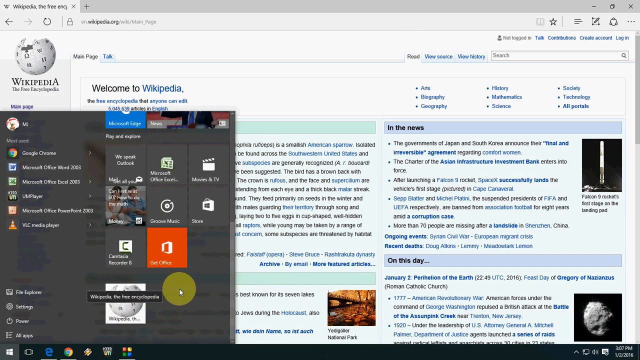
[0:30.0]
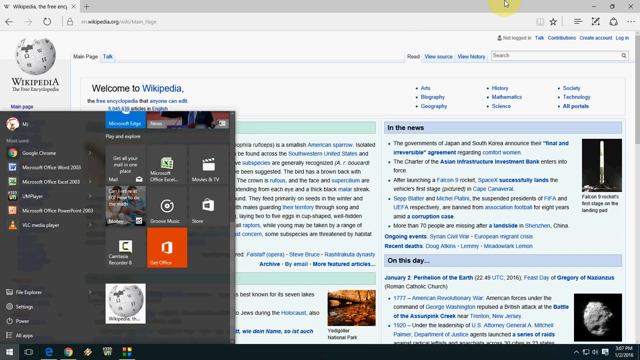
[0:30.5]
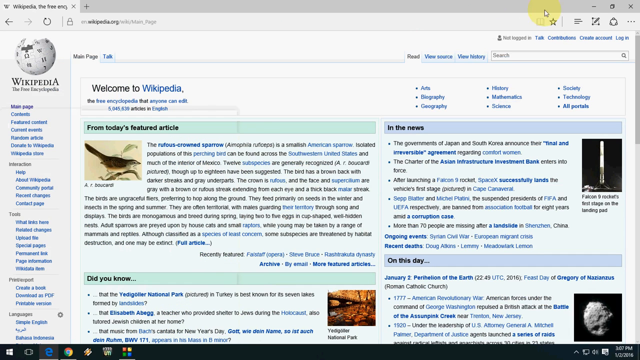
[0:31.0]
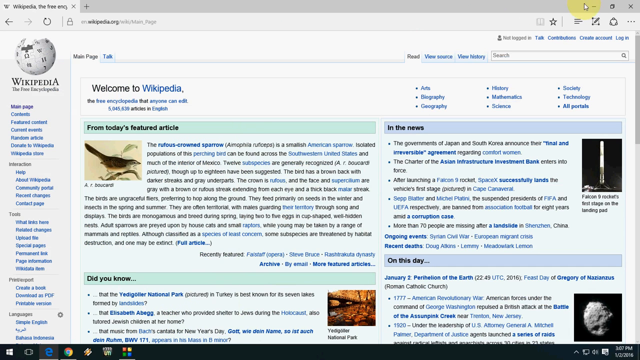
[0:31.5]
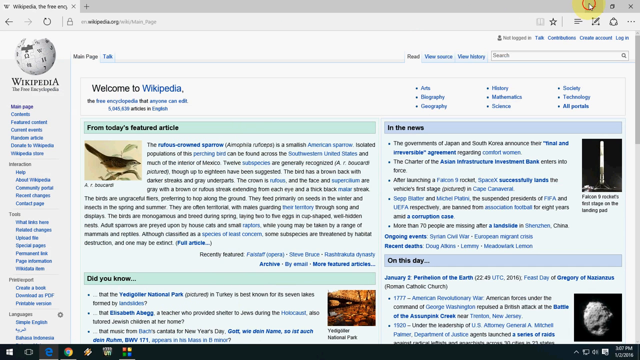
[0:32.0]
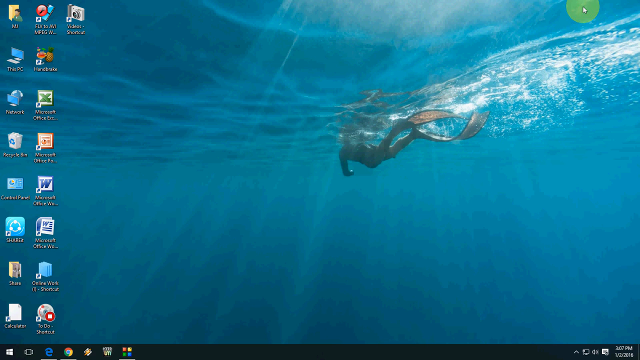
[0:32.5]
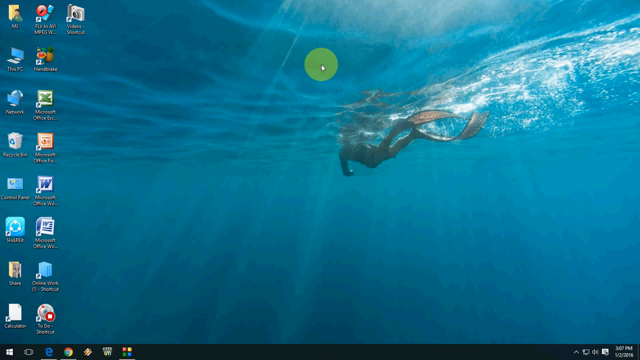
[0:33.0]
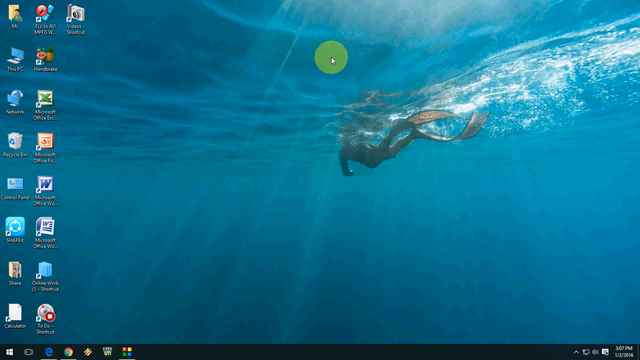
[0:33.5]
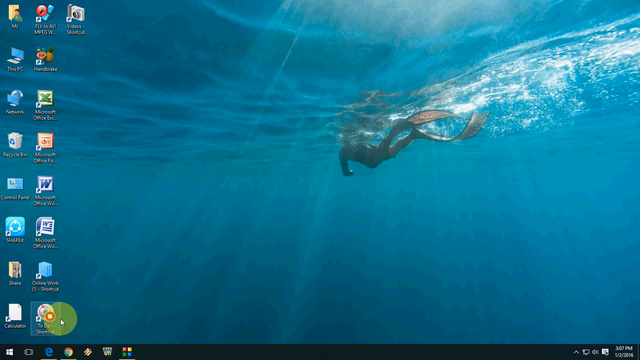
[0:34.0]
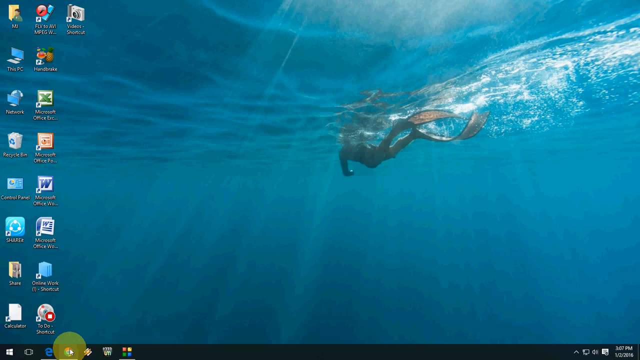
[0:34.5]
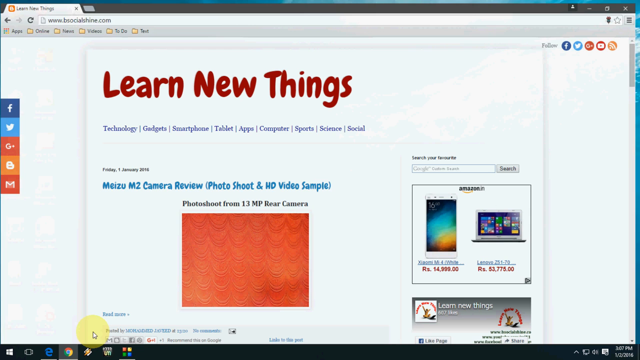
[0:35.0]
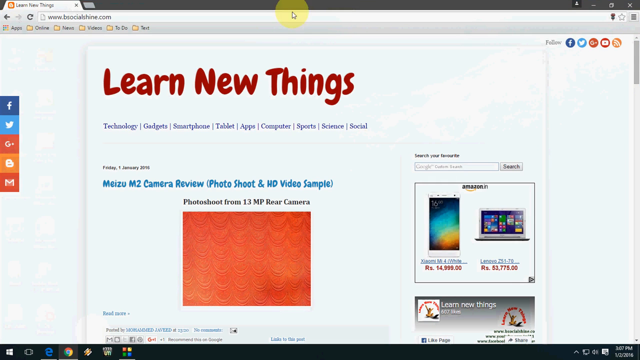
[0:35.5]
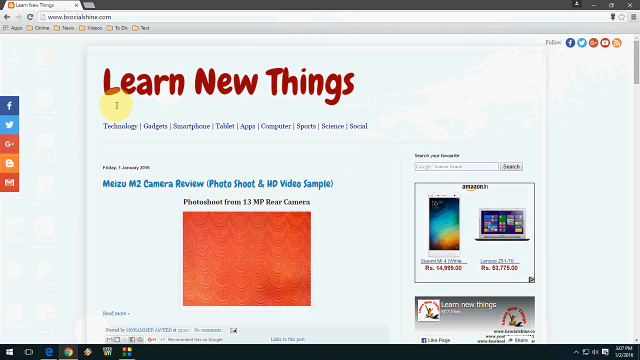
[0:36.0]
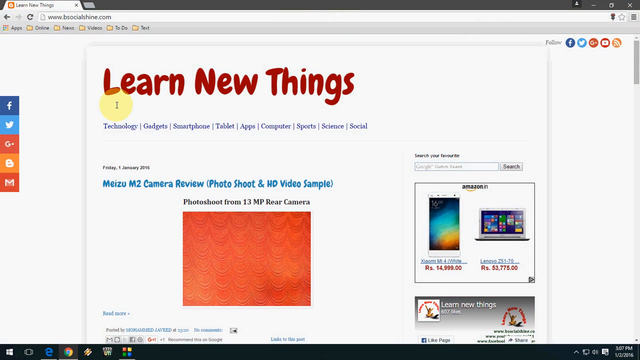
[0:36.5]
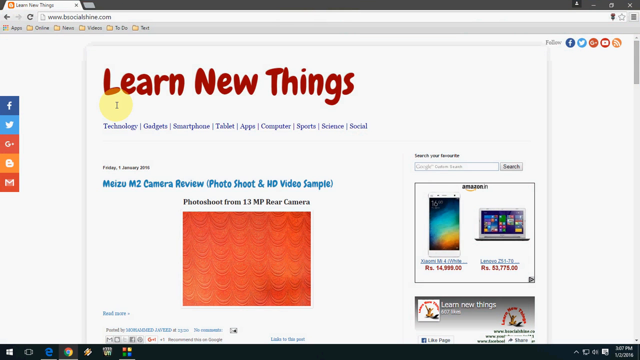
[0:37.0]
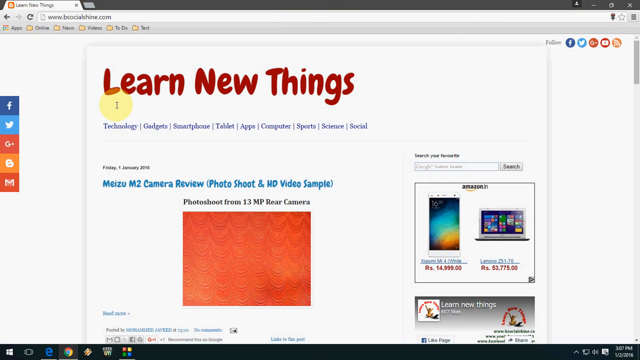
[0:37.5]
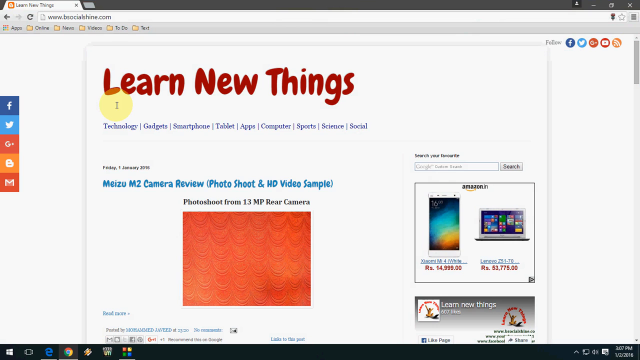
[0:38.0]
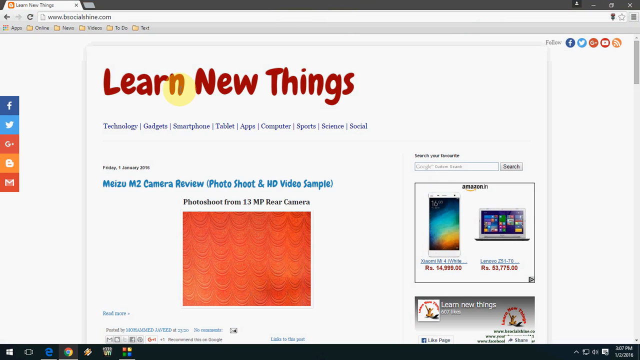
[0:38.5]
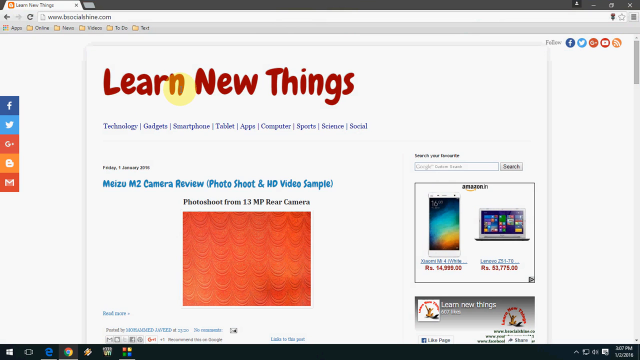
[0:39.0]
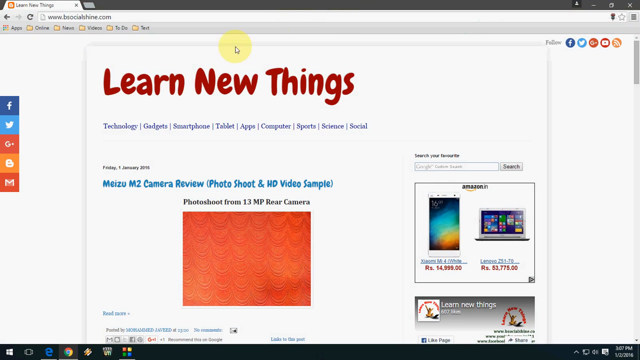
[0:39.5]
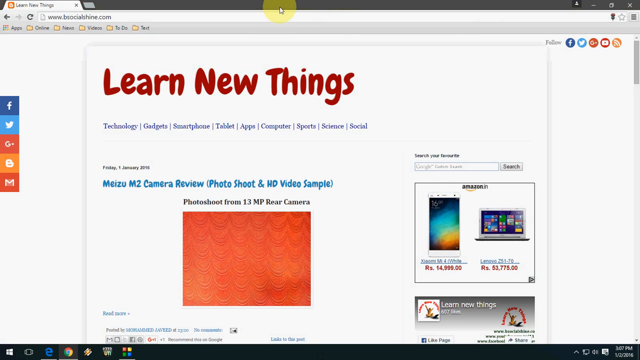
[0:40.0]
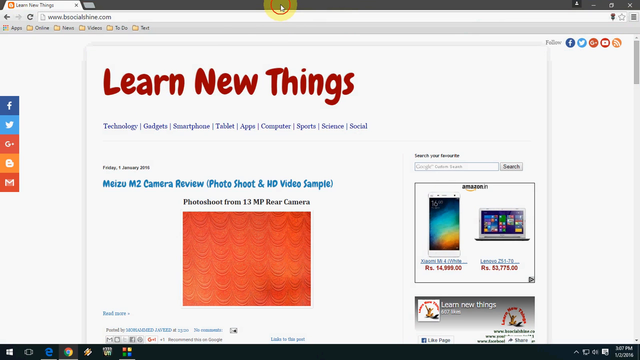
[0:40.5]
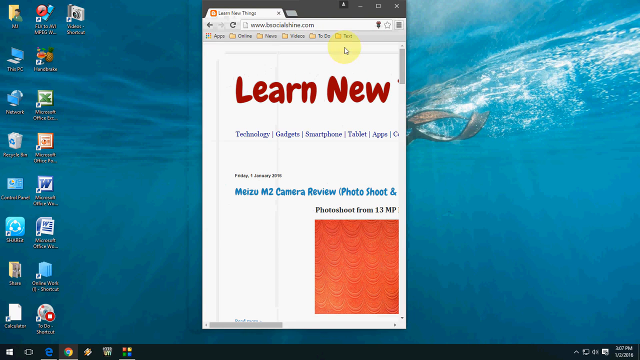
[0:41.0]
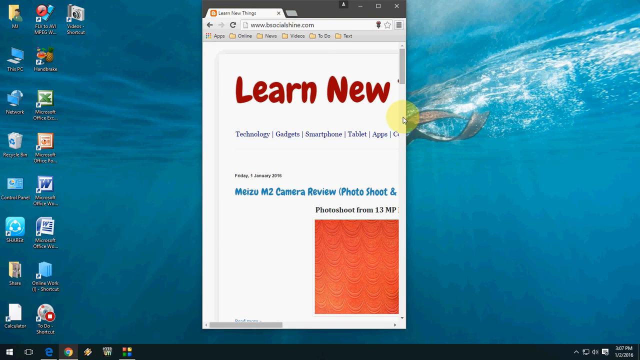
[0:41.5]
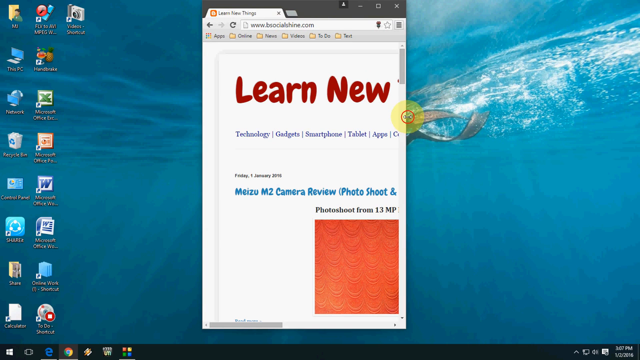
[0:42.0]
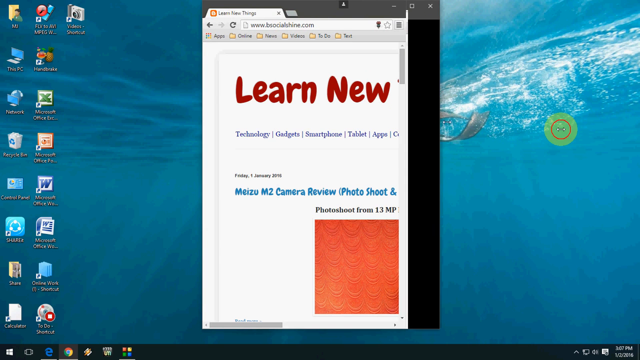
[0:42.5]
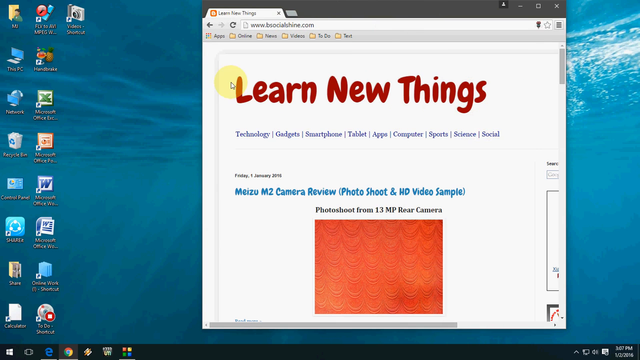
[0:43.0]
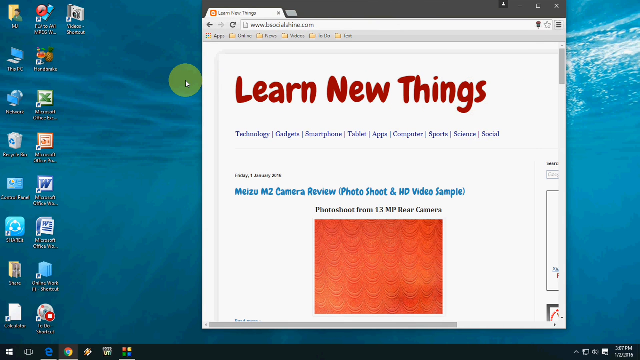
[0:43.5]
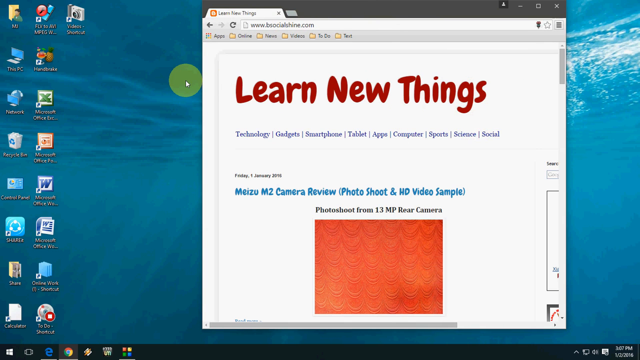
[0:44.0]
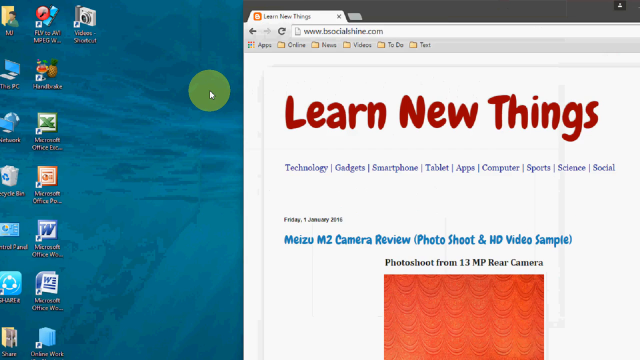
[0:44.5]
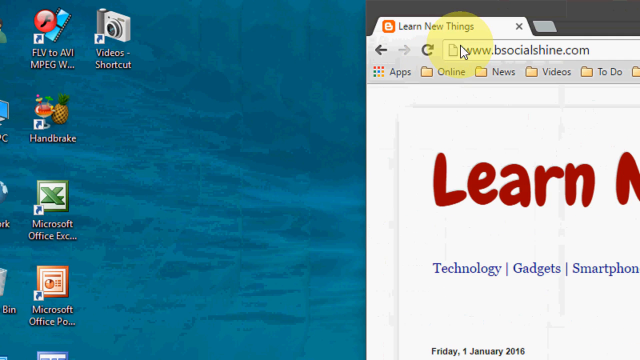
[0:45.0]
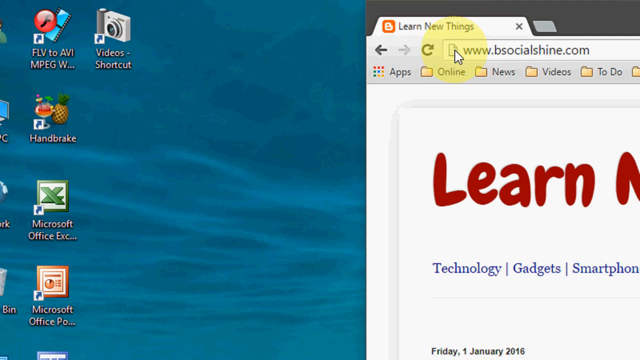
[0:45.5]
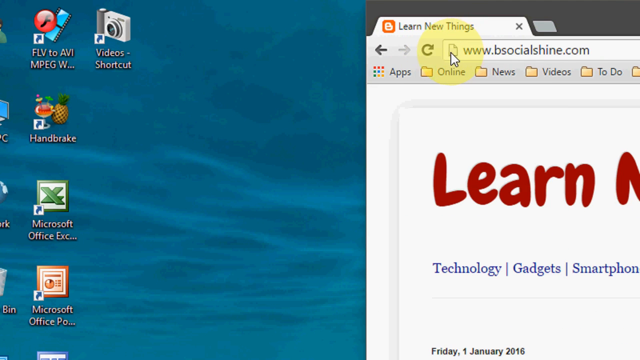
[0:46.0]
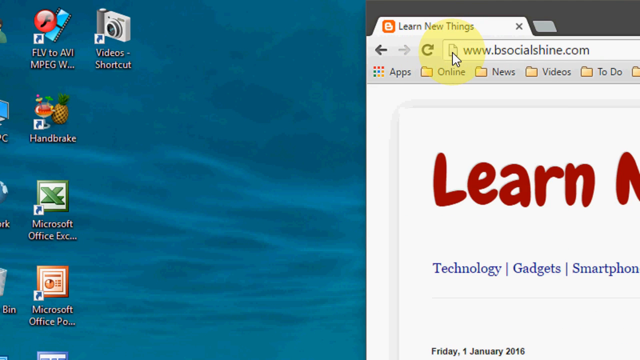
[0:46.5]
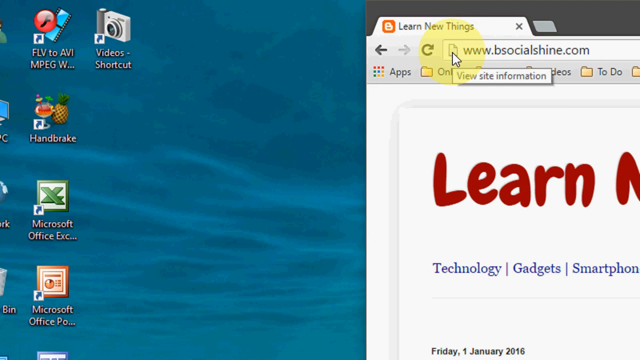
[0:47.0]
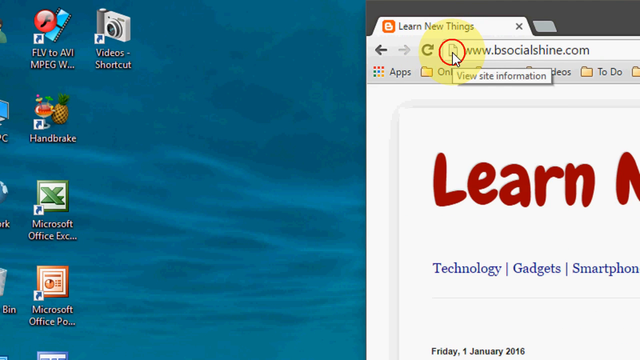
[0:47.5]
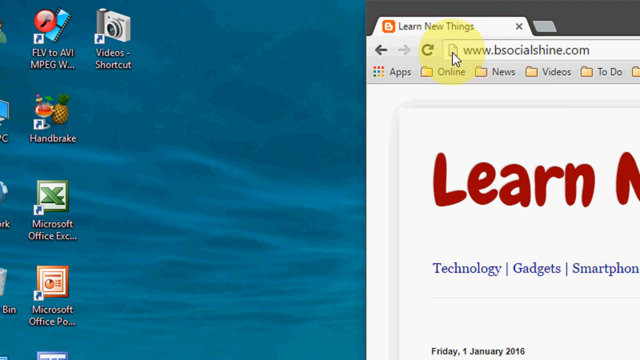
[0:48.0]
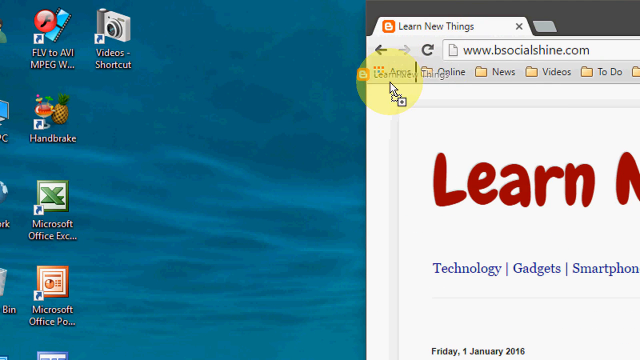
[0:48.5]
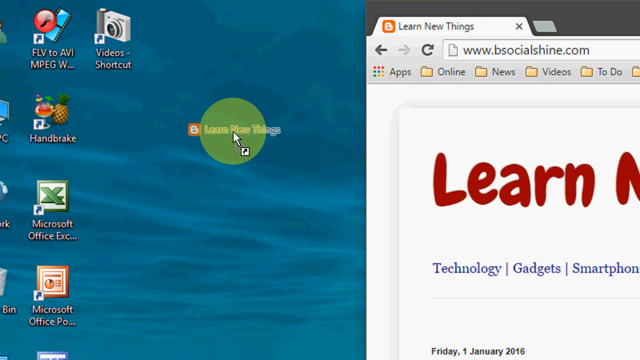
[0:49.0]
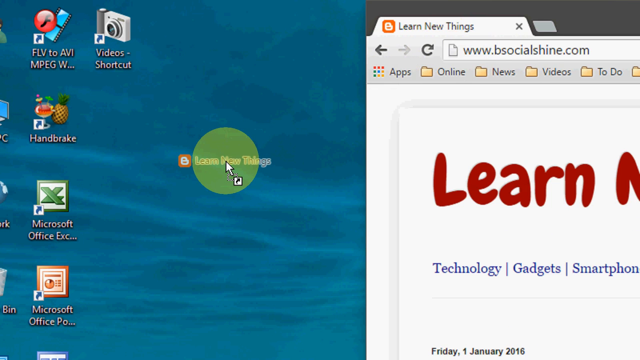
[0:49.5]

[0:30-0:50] The Microsoft Windows menu is expanded. On the left are apps such as Google Chrome, Microsoft Office Word, Microsoft Office Excel, Microsoft Office PowerPoint and Media Player, along with other icons for Windows apps. The user minimizes the internet browser by clicking the dash at the top right of the screen, revealing the desktop with various icons and the wallpaper of someone swimming under the water. A browser is launched, and the web page that opens reads "learn new things" in red font. The URL is hard to read. The mouse moves, marked by a yellow circle, resizes the browser, then clicks the paper icon beside the URL in the URL bar and drags it to the desktop.